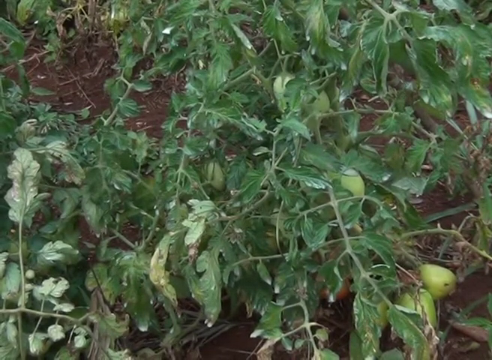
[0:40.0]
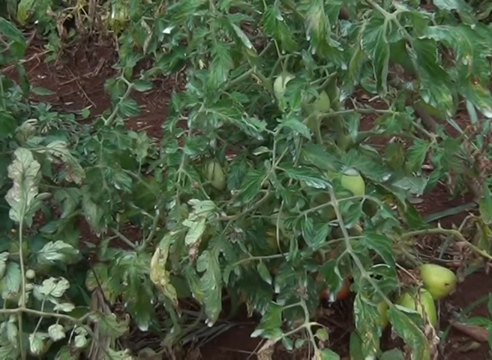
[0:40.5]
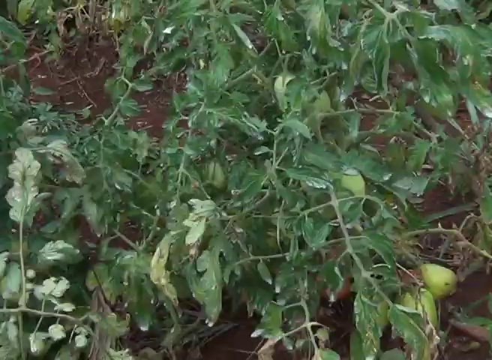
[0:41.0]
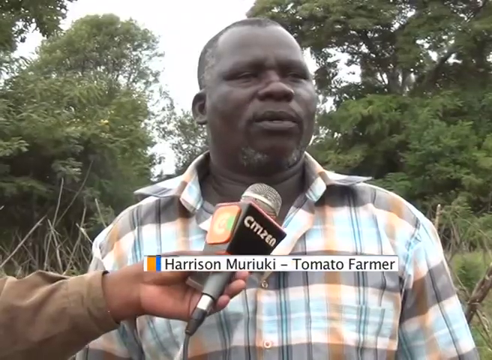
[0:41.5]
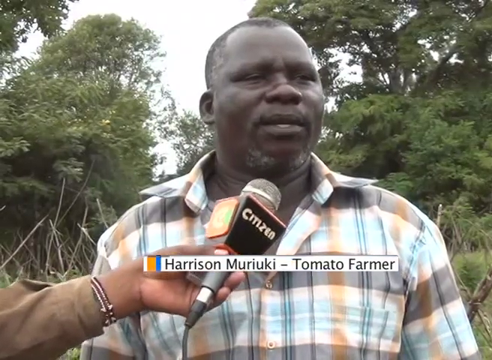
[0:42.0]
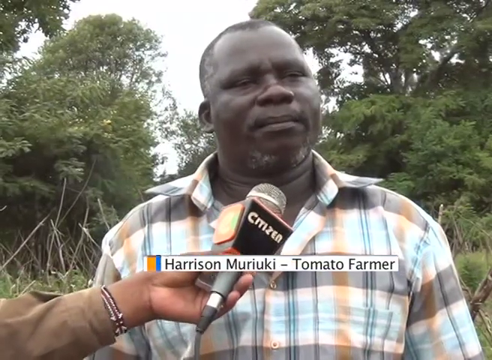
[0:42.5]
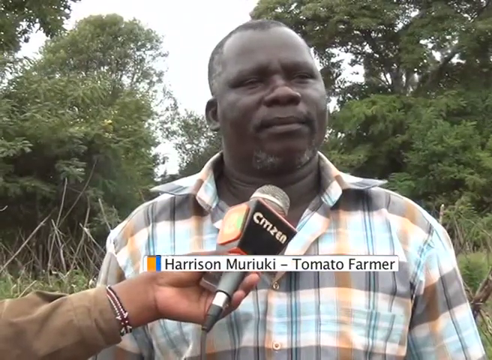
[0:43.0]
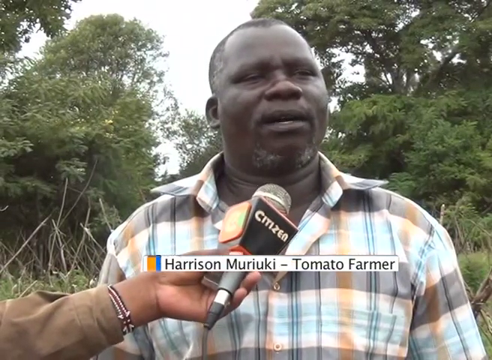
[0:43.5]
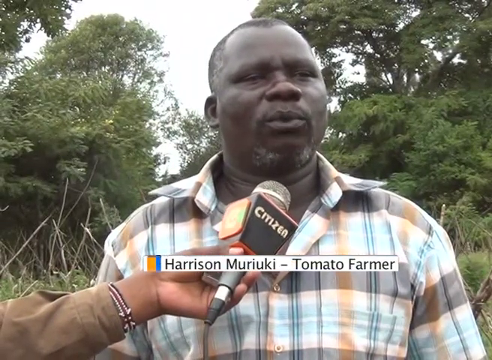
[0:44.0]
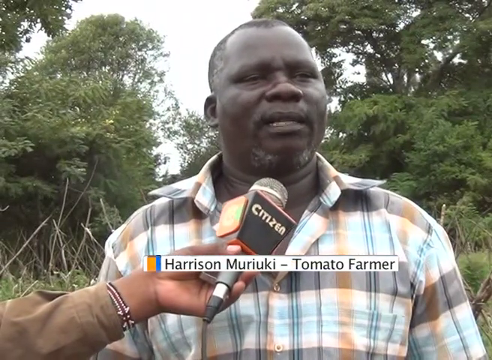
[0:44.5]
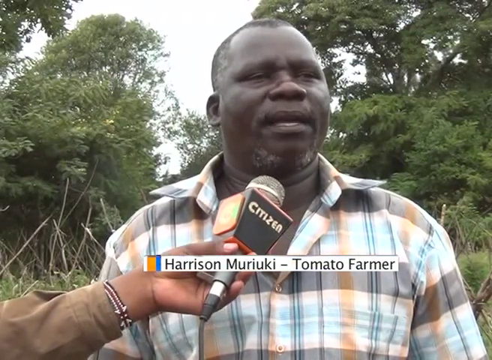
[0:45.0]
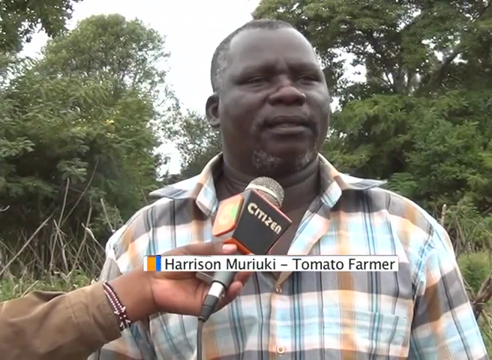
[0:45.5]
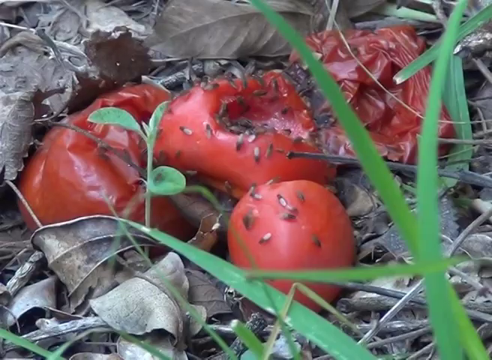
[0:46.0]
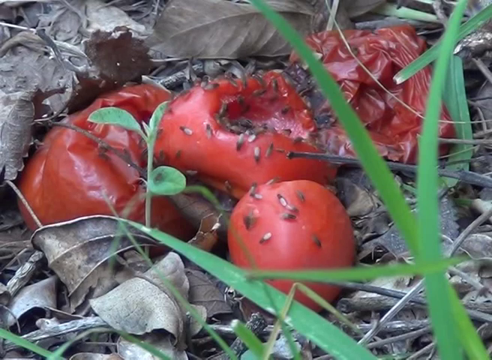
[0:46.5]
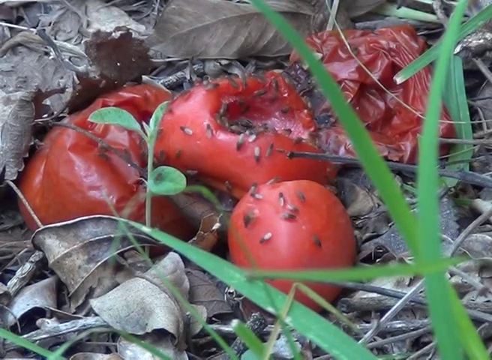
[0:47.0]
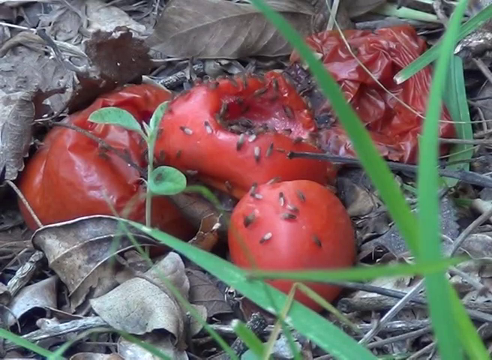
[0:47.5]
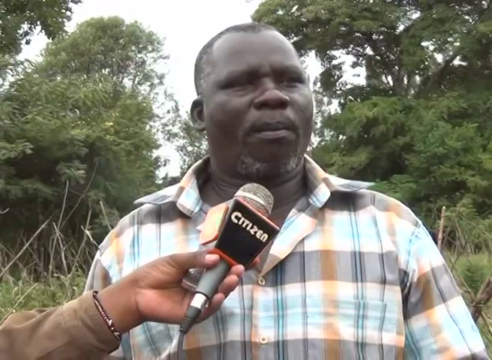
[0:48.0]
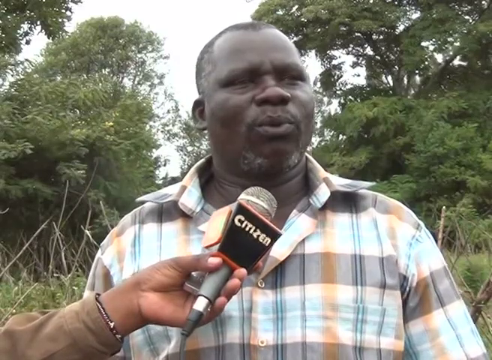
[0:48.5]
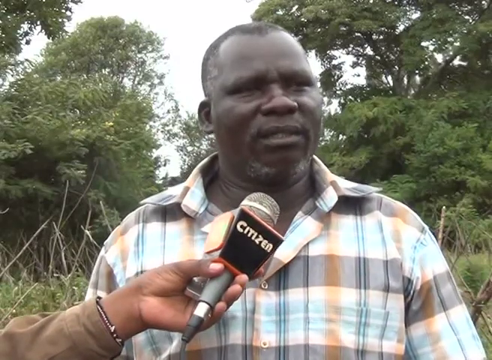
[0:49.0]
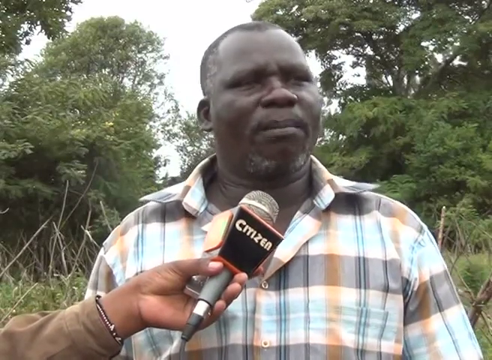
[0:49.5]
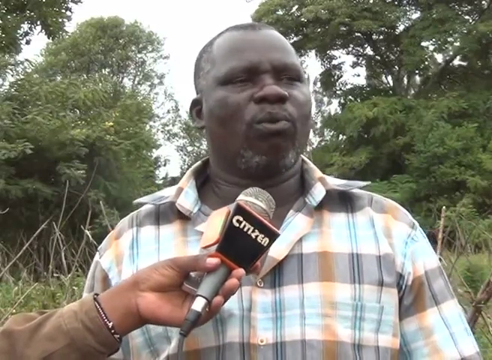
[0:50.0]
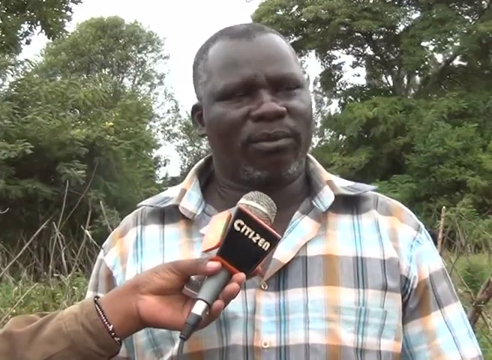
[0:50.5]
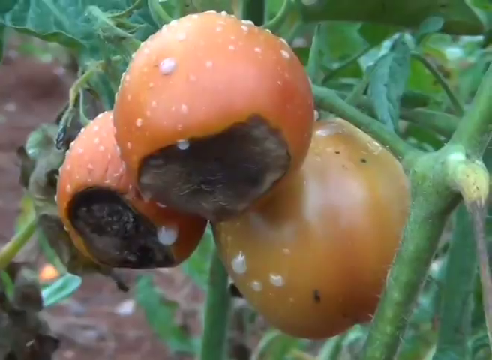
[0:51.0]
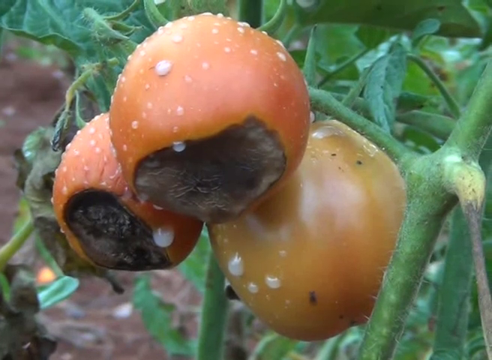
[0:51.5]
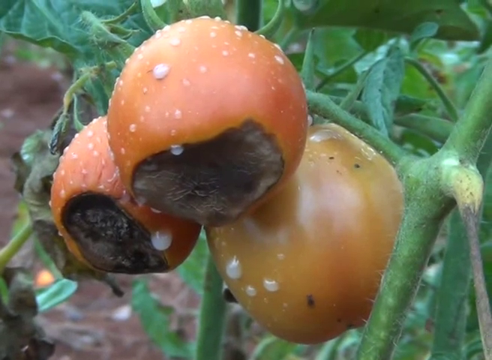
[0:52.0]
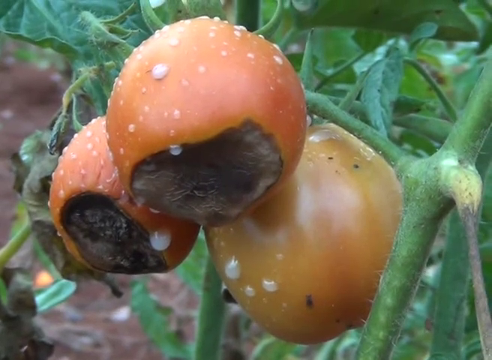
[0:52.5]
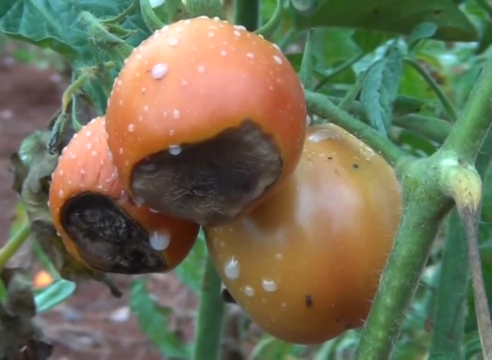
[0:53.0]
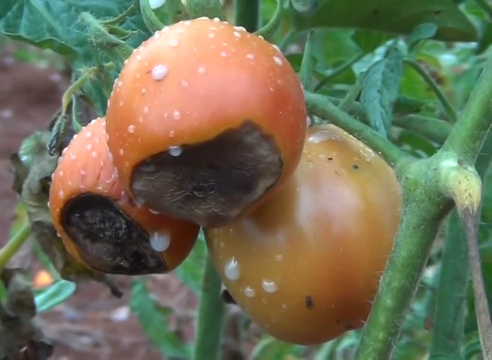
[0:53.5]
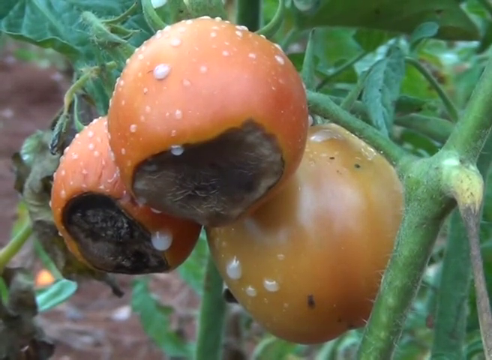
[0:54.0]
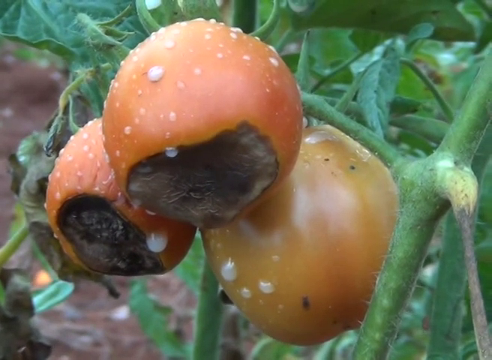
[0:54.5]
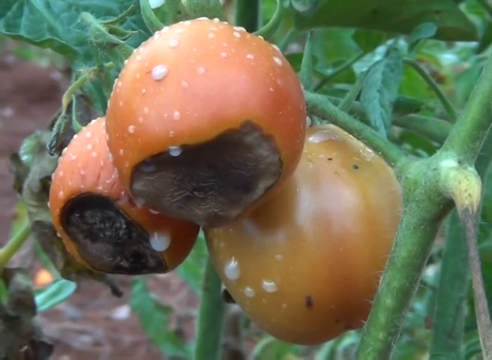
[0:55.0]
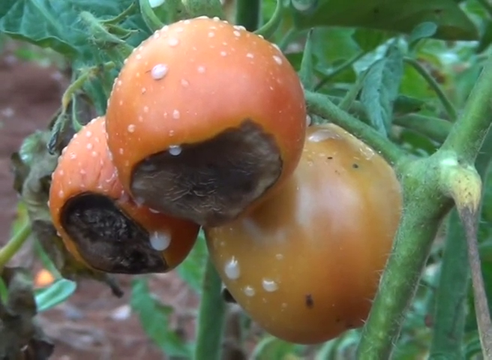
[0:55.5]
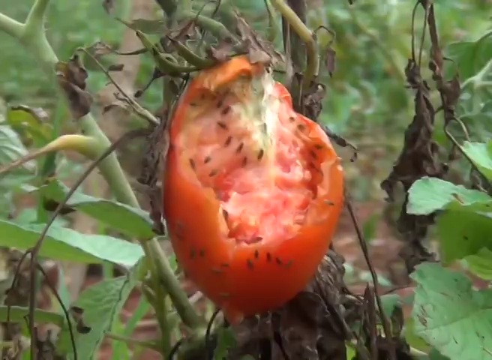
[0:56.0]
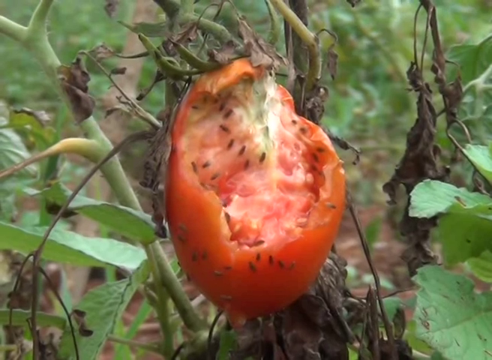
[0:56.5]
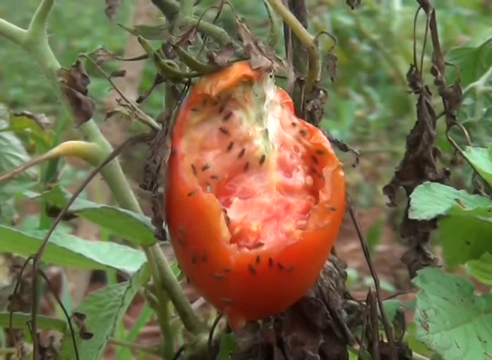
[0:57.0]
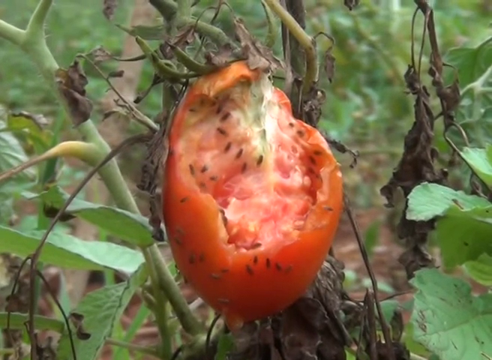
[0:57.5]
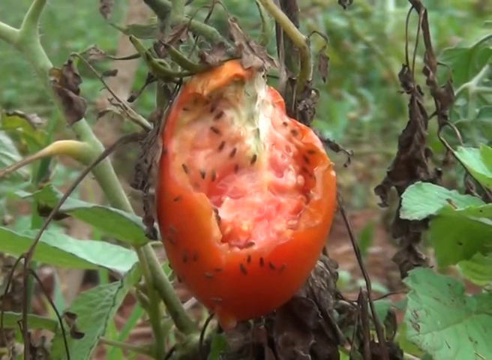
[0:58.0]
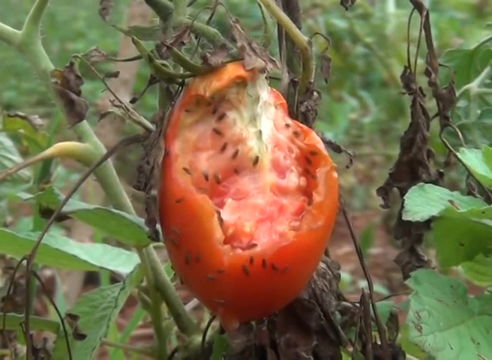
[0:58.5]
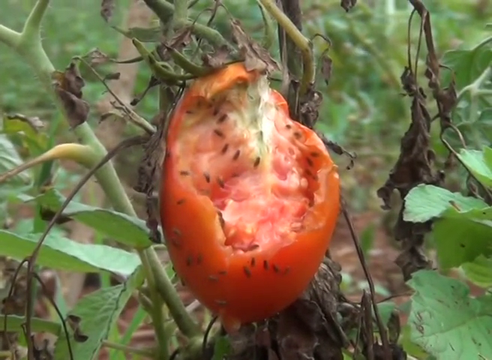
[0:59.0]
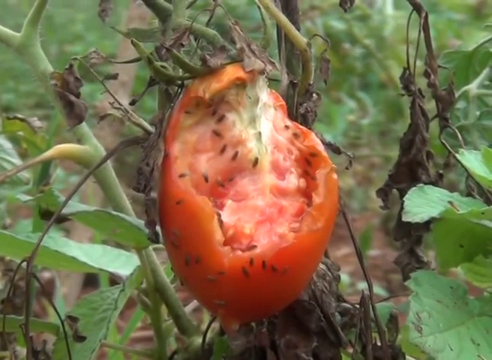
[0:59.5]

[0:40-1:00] A plant has vines with green tomatoes hanging from them. The video cuts to a man being interviewed. A reporter holds a microphone, their hands sticking out from the left side of the screen; the microphone has orange and black logos around it. The man being interviewed wears a white, gray, blue and orange plaid shirt, with trees behind him. The video cuts to tomatoes on the floor that look like they are rotting, with many fruit flies on top of them, then back to the man being interviewed. Another vine has tomatoes that look somewhat orange and also appear to be rotting; they seem to be sweating, and the liquid coming out of them looks white. Next, another tomato hanging from a vine looks like it is rotting away, with some of its skin peeled off, and fruit flies are on it.